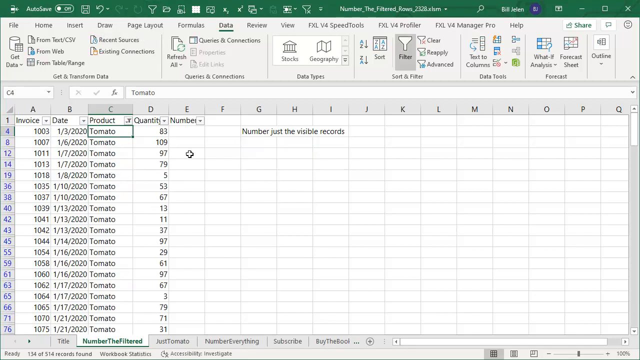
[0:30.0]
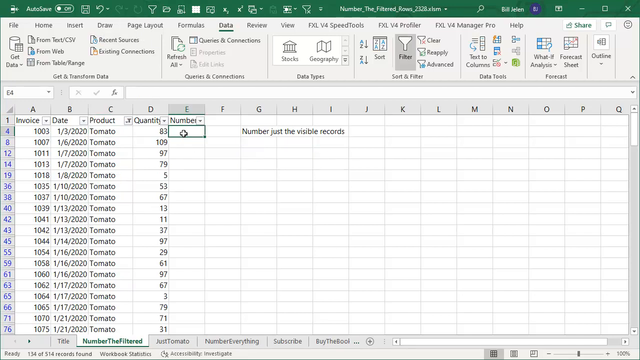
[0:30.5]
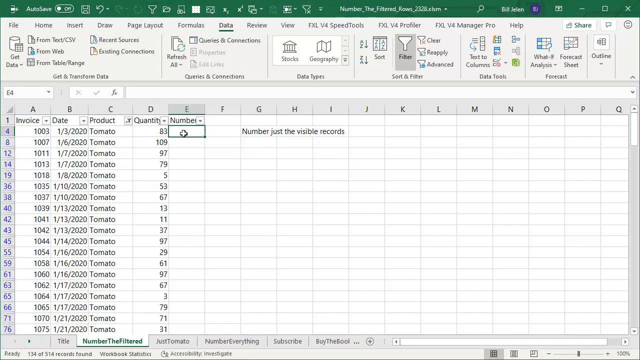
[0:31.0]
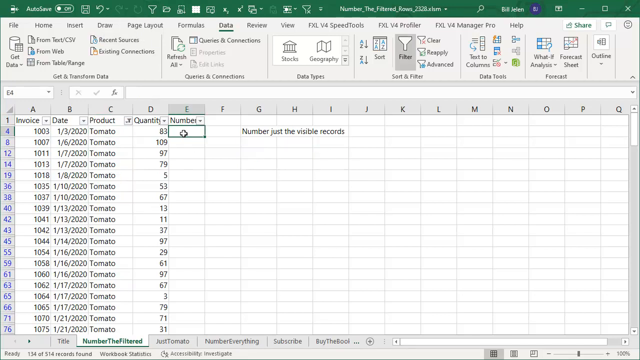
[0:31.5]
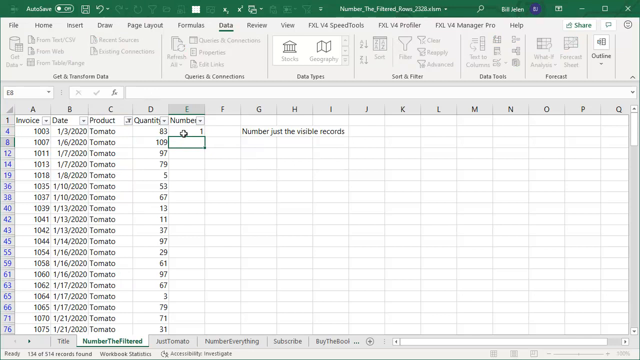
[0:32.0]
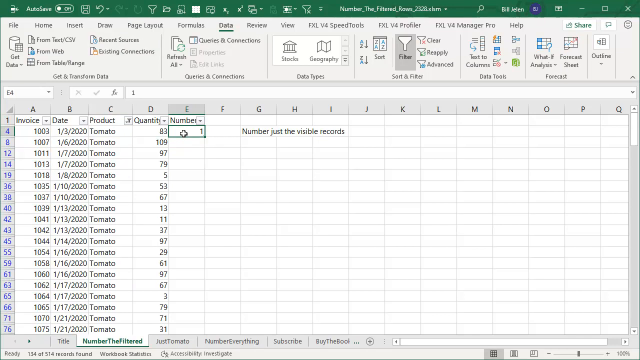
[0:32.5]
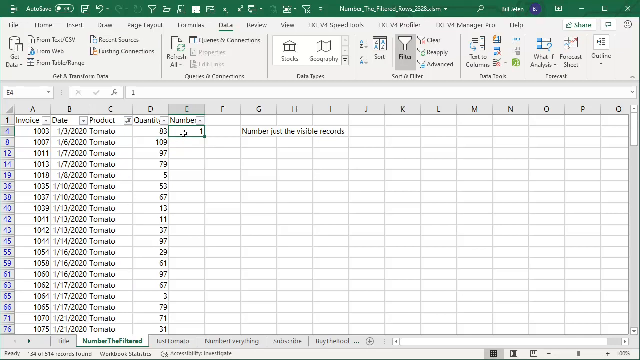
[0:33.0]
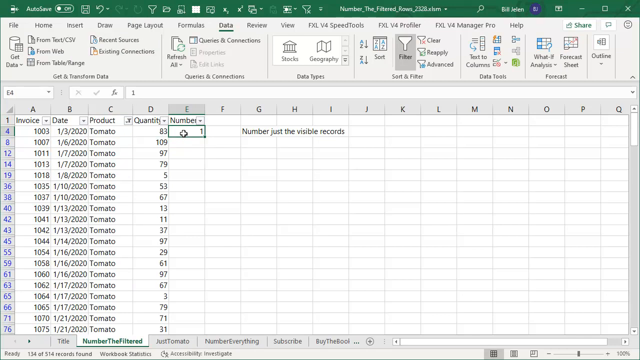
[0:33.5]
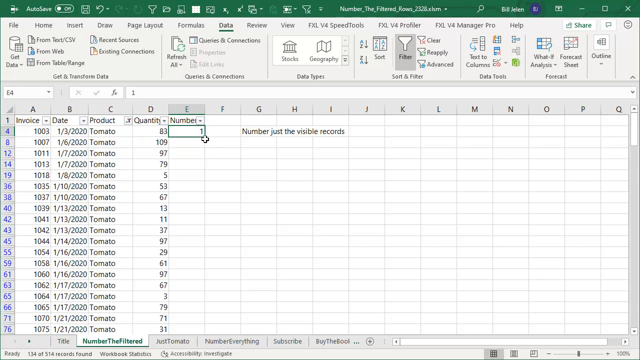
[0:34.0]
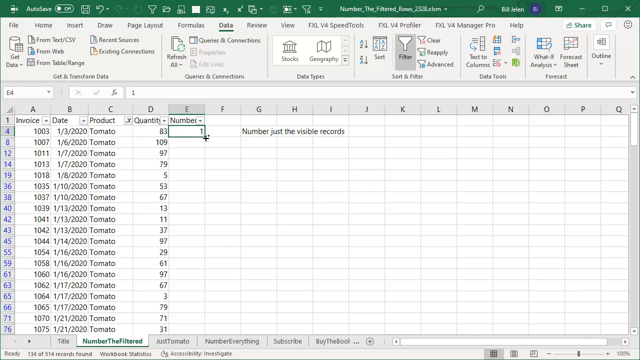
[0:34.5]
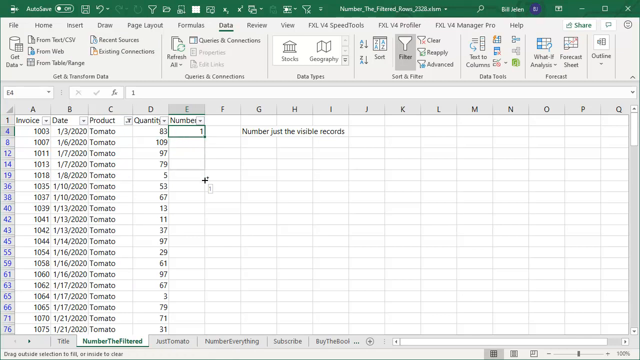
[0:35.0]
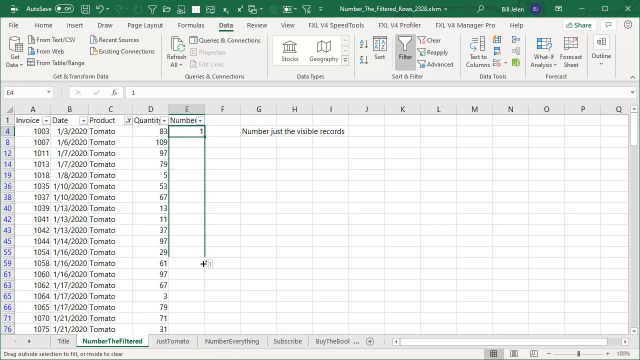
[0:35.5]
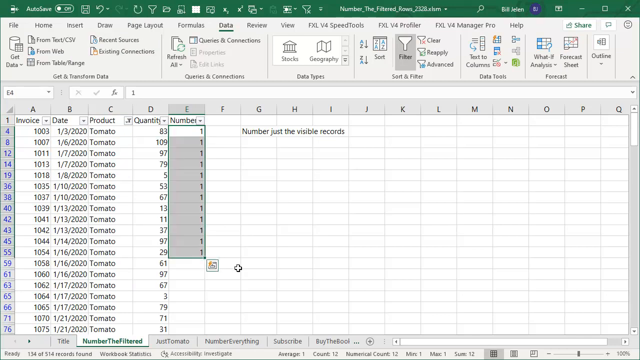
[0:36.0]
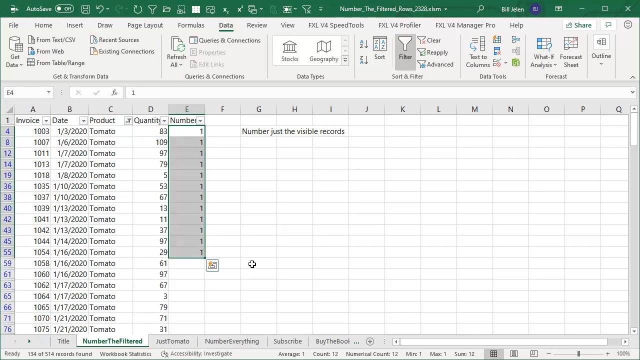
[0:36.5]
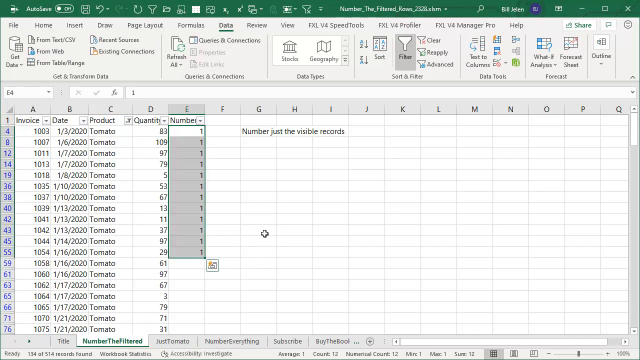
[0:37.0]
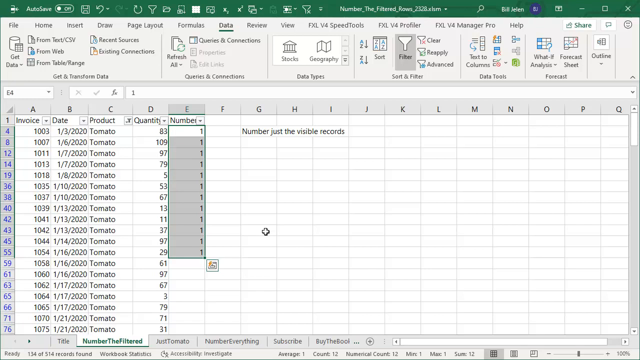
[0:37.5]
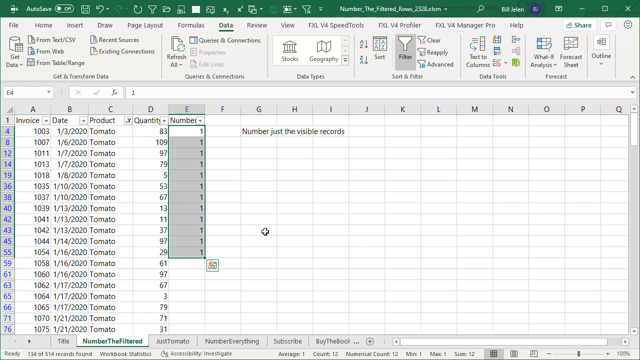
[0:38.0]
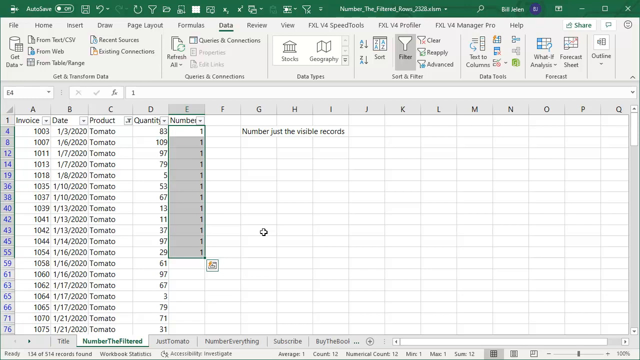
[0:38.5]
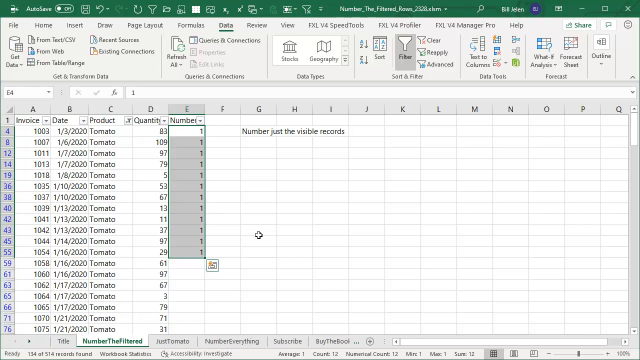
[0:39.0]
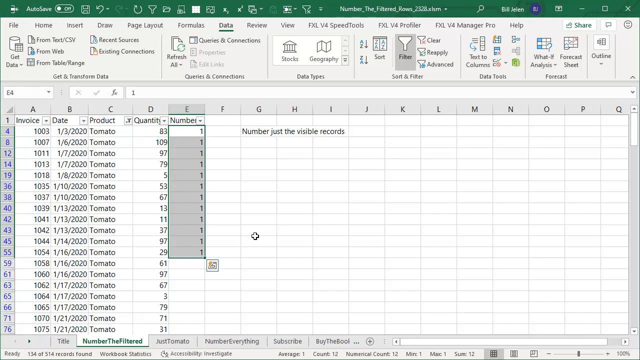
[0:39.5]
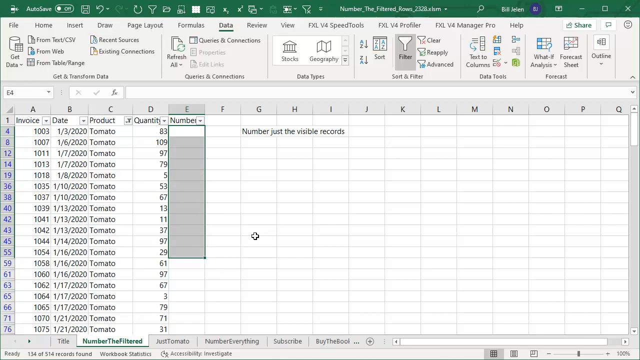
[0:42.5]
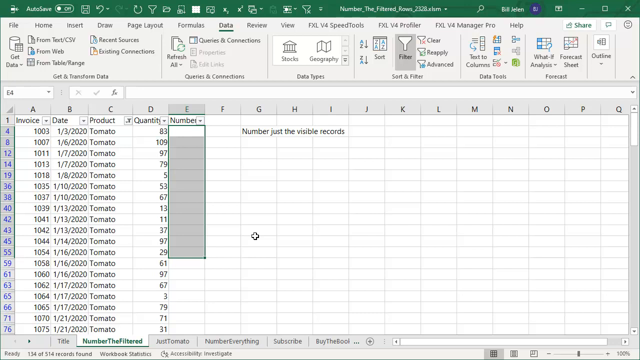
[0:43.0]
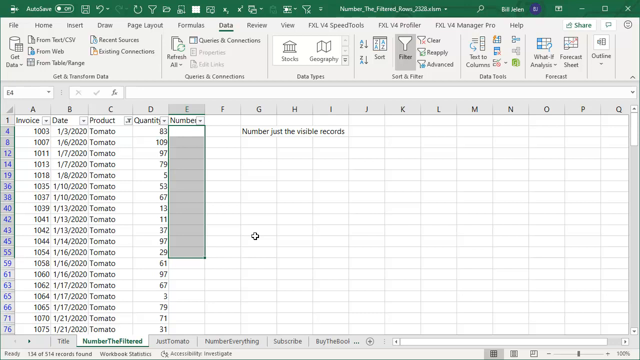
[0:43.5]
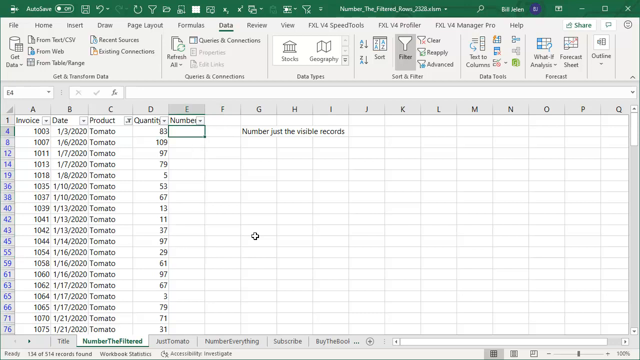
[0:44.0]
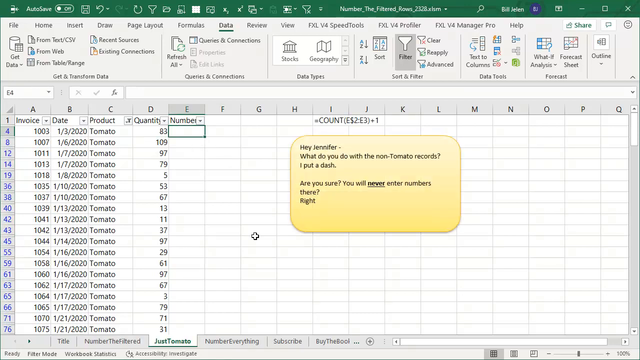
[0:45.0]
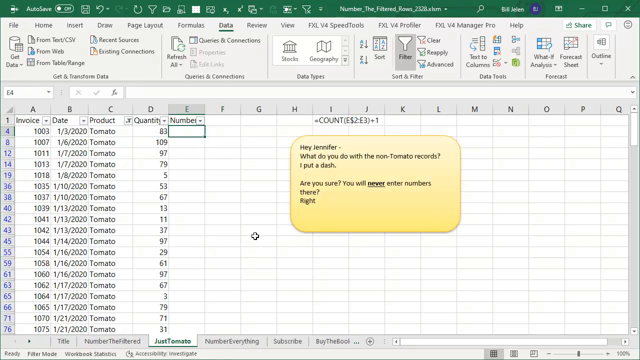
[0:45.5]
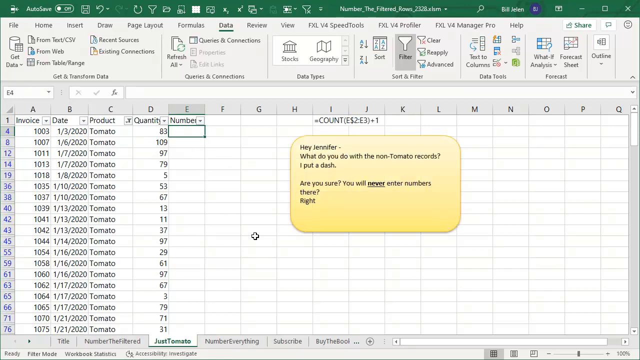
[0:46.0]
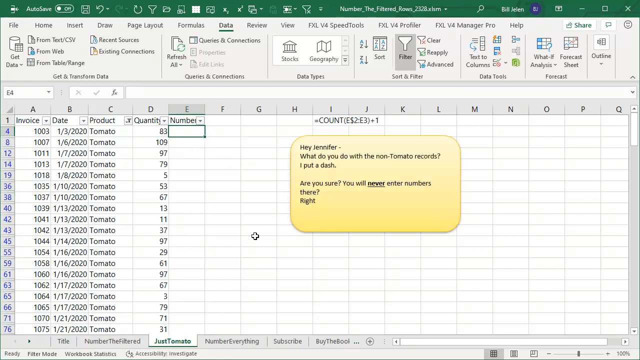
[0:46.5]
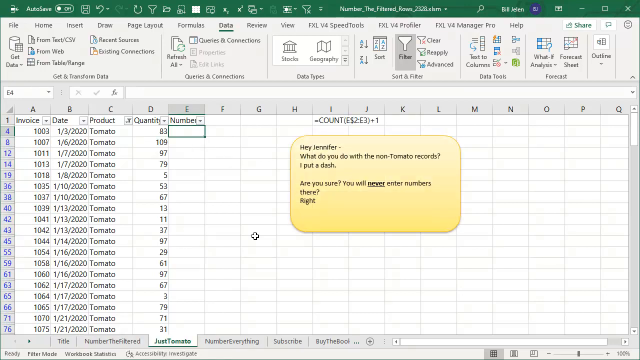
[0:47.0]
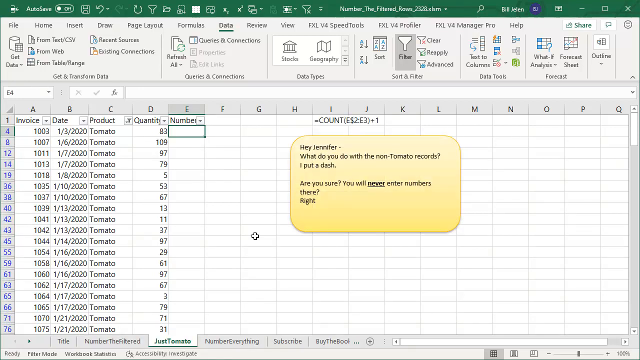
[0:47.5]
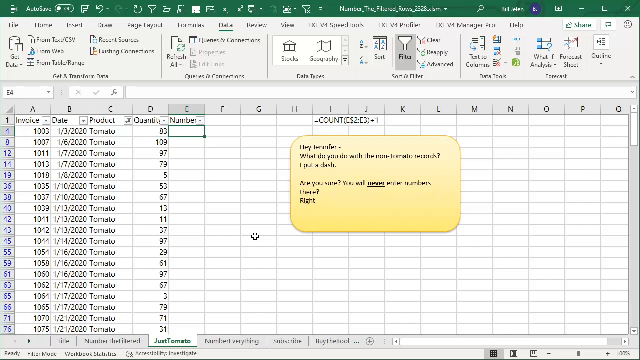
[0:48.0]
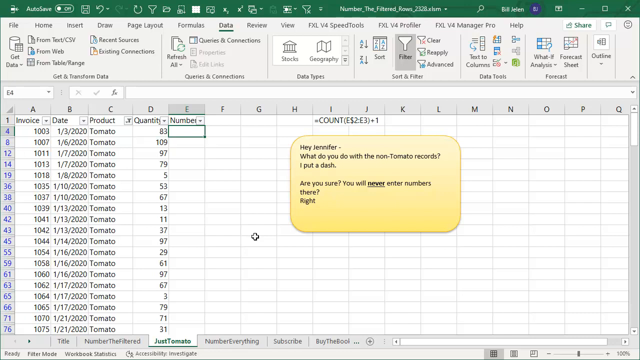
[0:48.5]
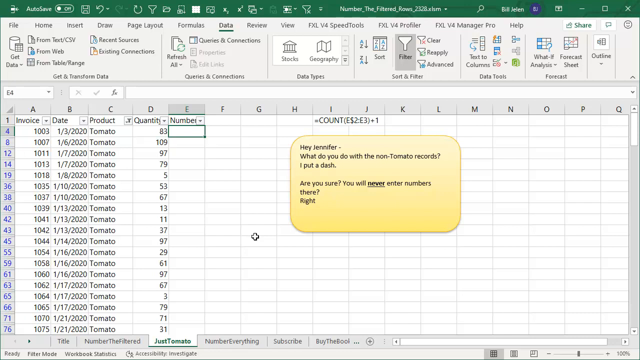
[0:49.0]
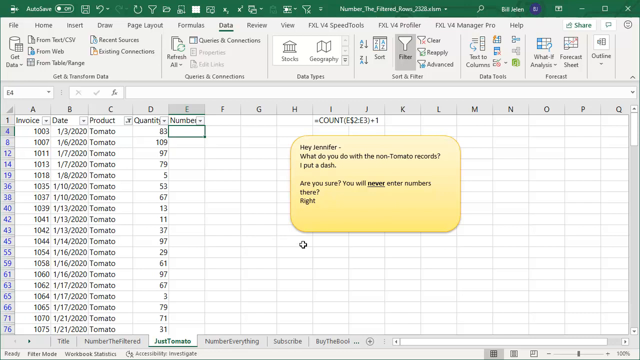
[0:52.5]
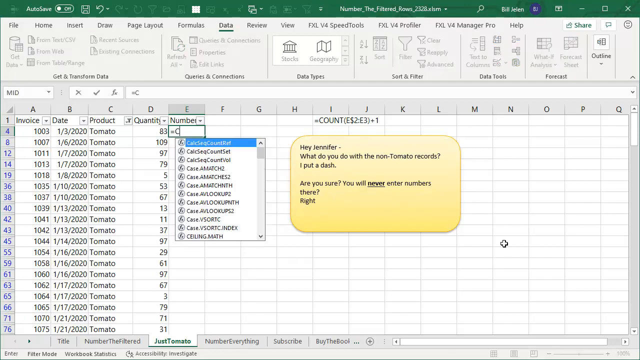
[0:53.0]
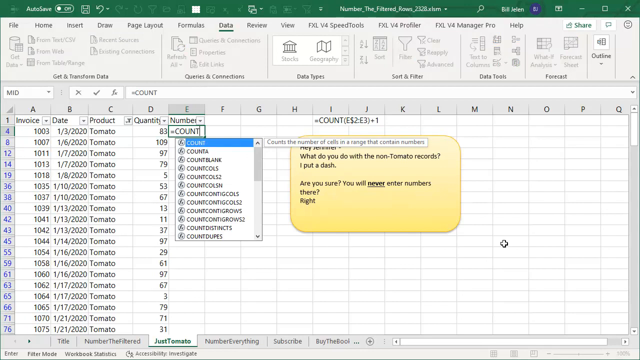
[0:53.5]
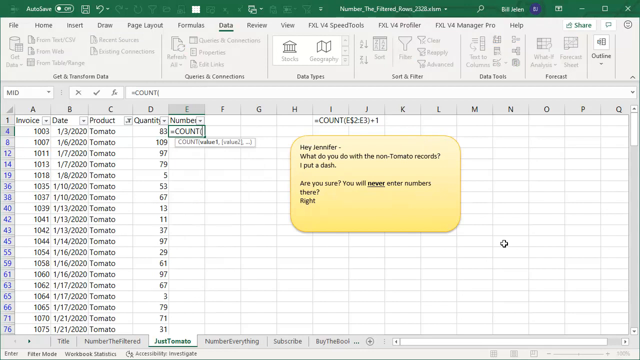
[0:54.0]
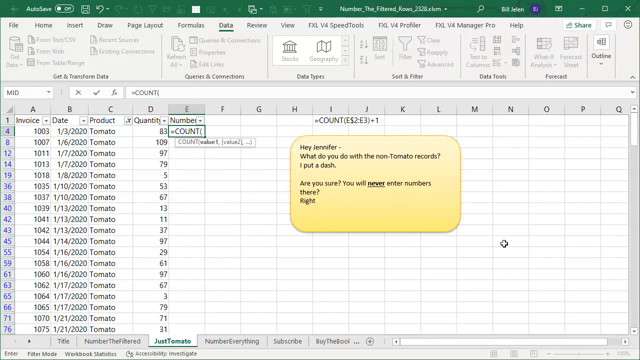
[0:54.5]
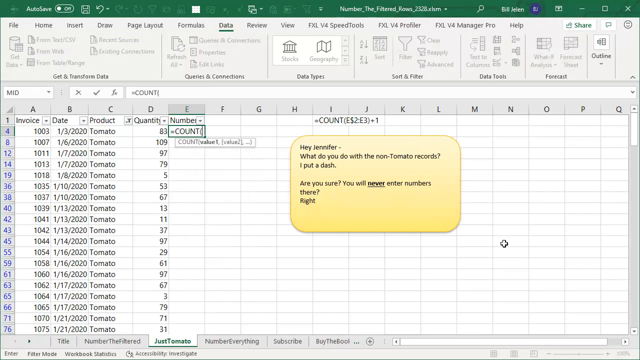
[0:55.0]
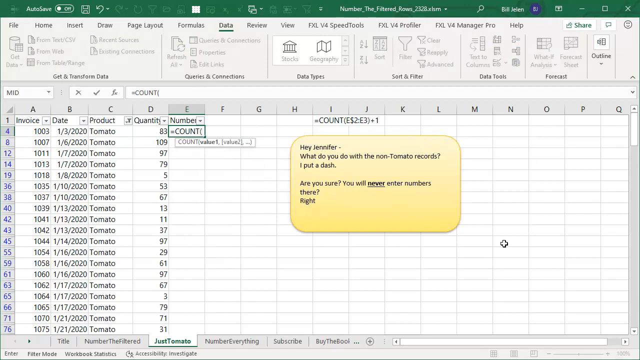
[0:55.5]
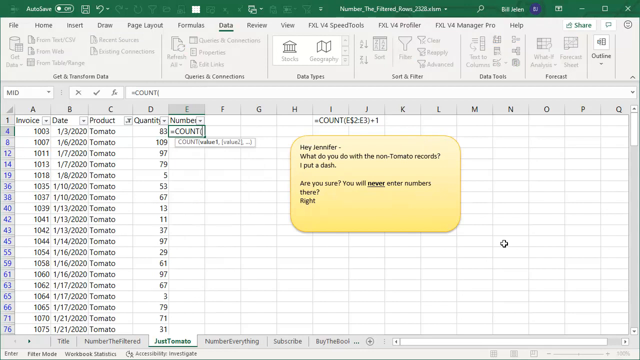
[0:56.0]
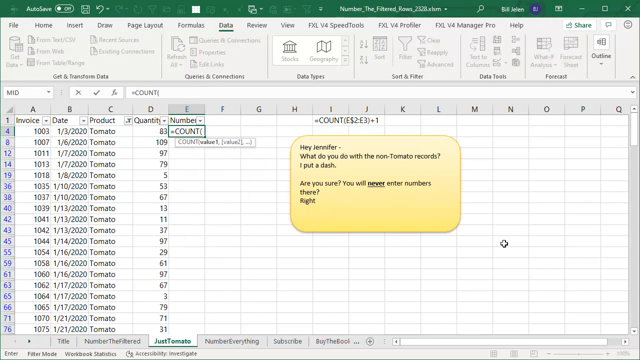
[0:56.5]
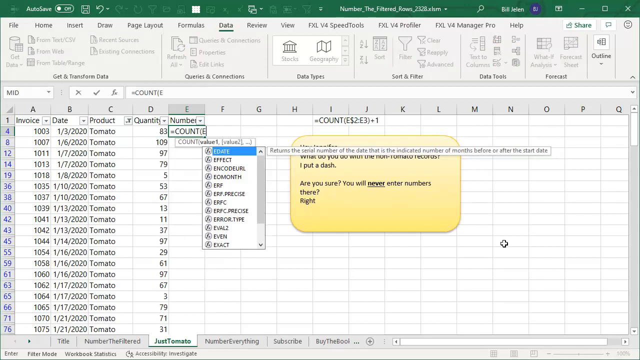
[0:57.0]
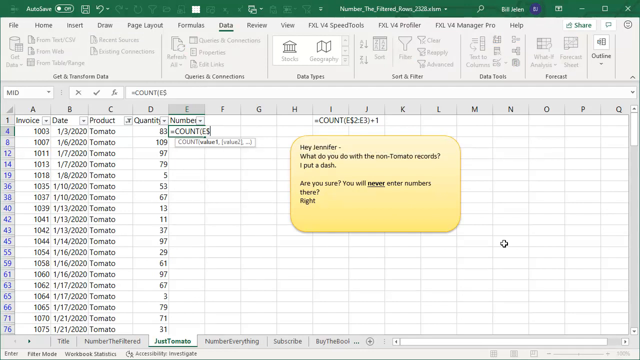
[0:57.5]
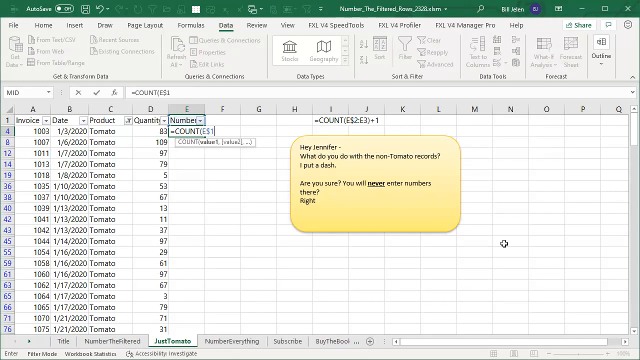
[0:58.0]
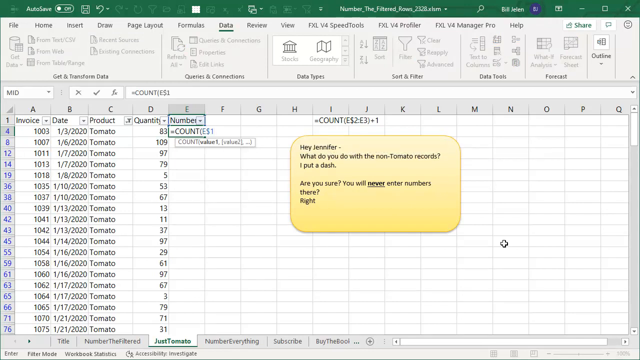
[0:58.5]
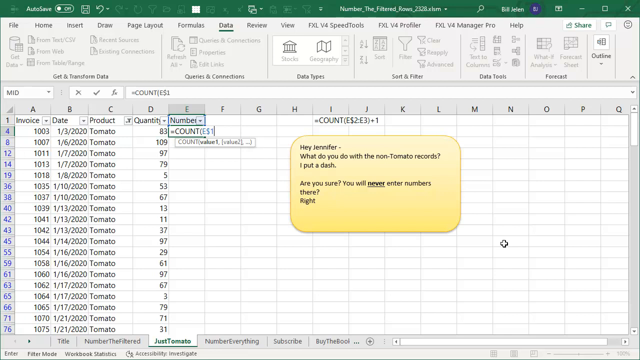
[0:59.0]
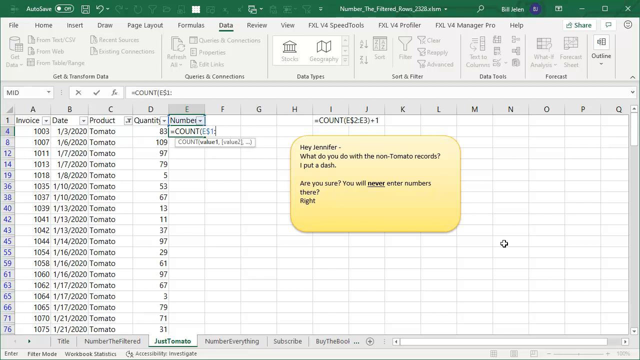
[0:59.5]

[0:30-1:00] The filter button was on the left side; now, on the right beneath text reading "FXL v4 profiler," there is a large gray box with a white funnel-like icon and the word "filter" underneath, in a darker gray than everything around it. Cell C4, "tomato," under the product column, has a green border. With a plus cursor, the user clicks E4 in the number column and types "1." They then click the bottom right of the E4 cell, where a dark plus sign appears, and drag down, filling the cells with ones; these show as darker gray boxes except the first one in E4, which is white. The plus cursor moves over to G43, then back to E4, which is now blank. Below H2, an orange caption box pops up reading "hey Jennifer What do you do with non tomato records? I put a dash" and "are you sure you will never enter numbers there, right?" with "never" bolded and underlined. Above it, across I1 and J1, text spanning two cells reads "=count(" followed by some numbers. The user then starts typing a count formula with parentheses in E4, and a box appears underneath with text including "value 2." They type E, a dollar sign, then 1.